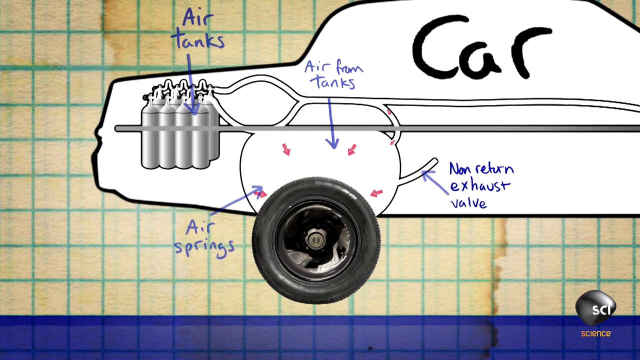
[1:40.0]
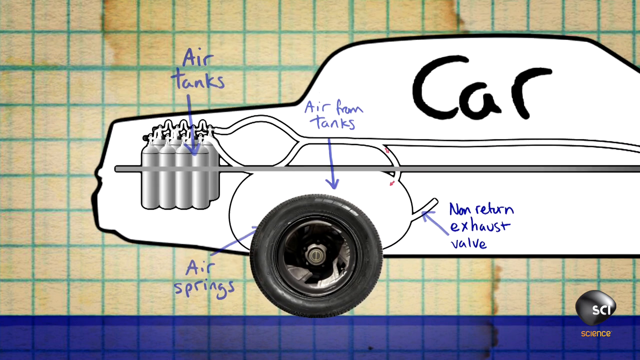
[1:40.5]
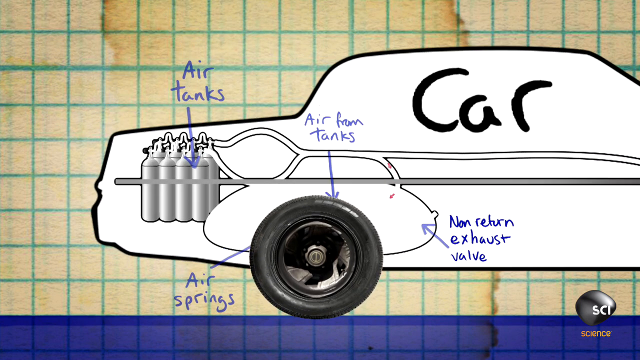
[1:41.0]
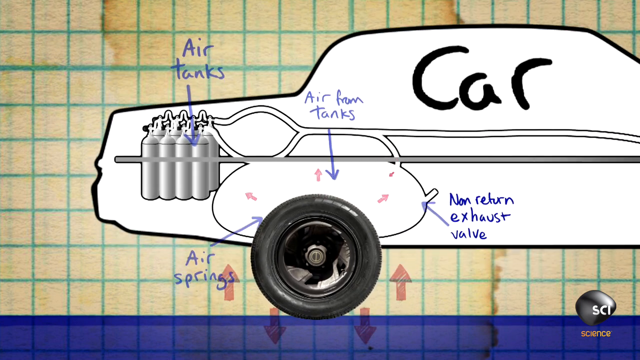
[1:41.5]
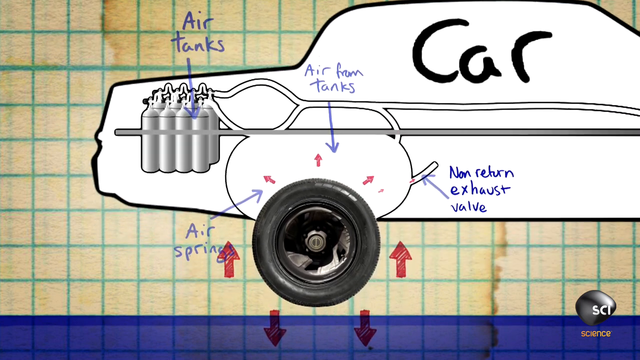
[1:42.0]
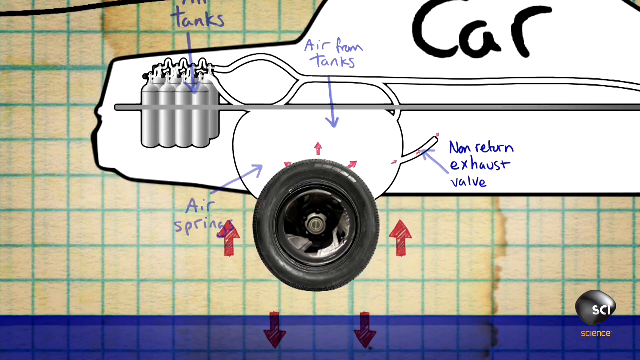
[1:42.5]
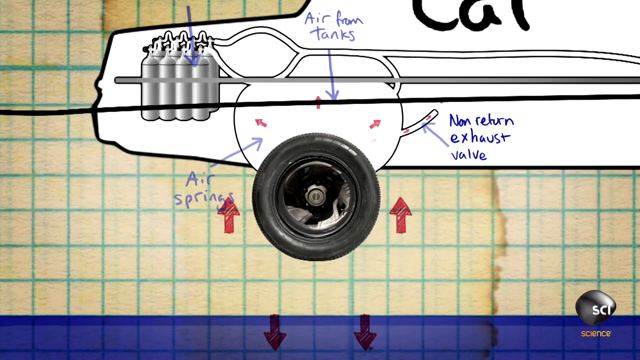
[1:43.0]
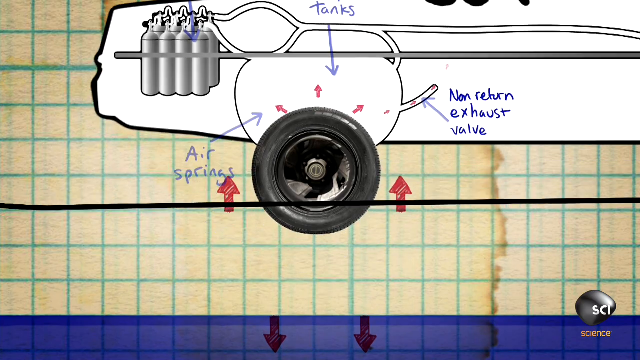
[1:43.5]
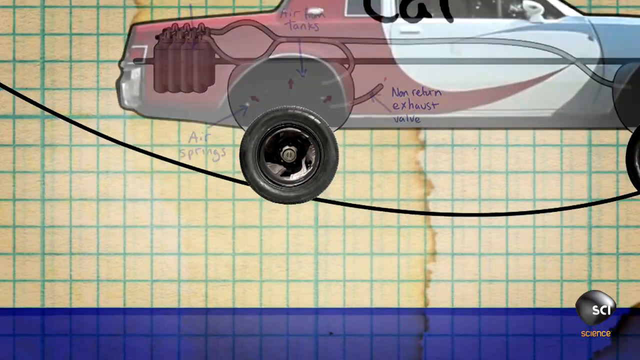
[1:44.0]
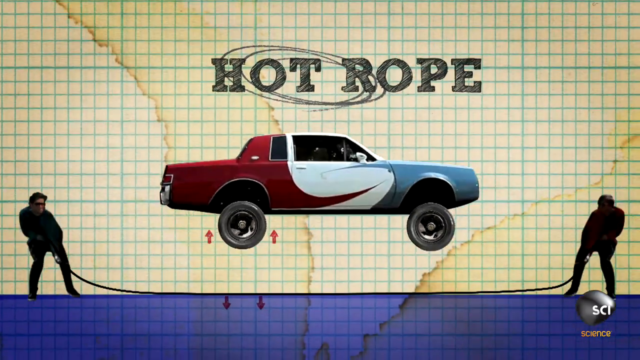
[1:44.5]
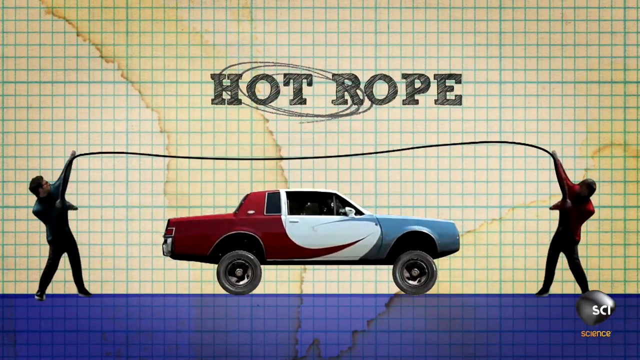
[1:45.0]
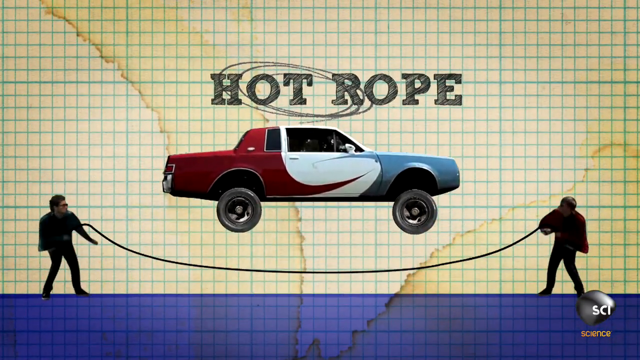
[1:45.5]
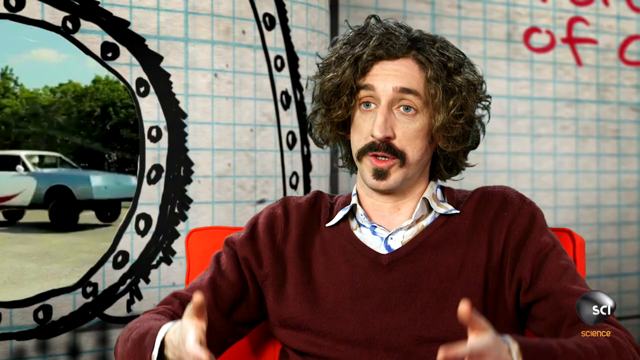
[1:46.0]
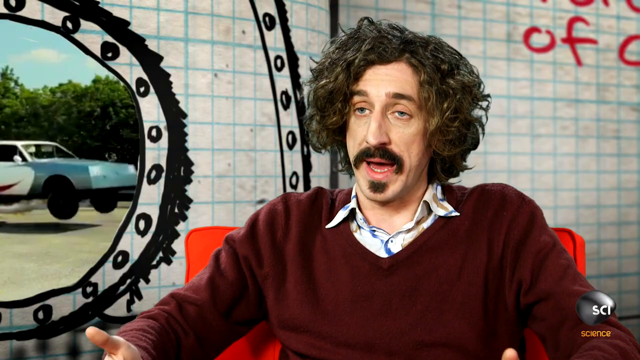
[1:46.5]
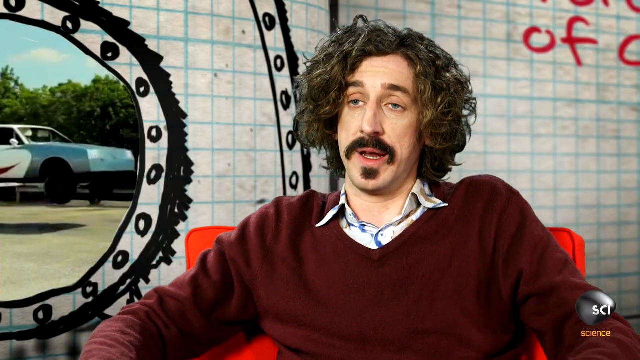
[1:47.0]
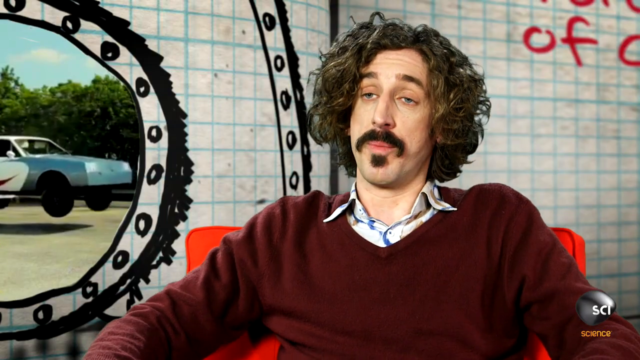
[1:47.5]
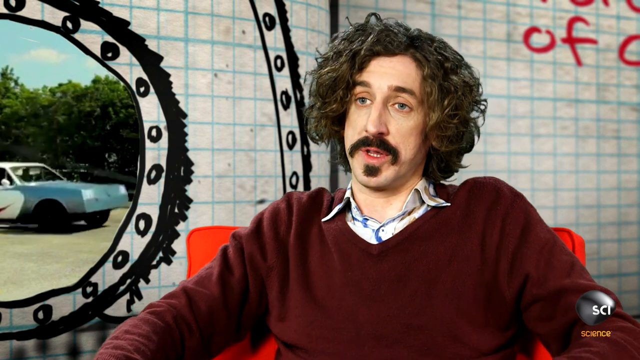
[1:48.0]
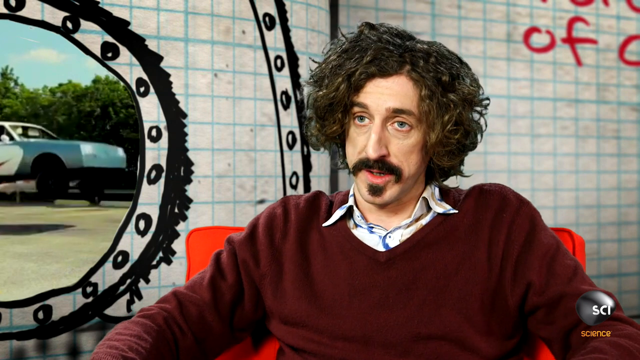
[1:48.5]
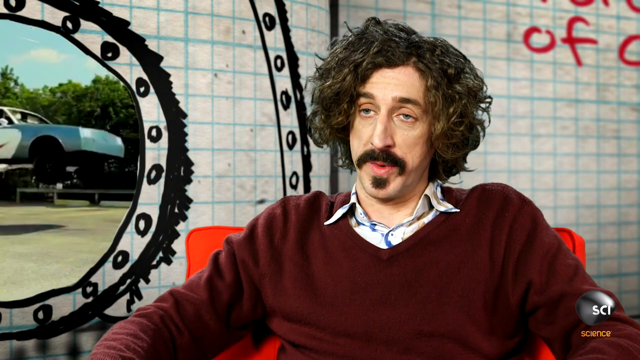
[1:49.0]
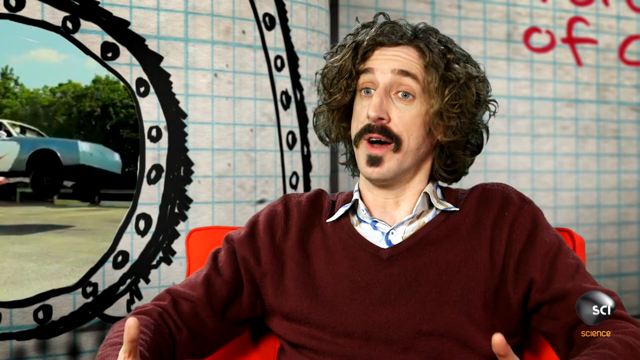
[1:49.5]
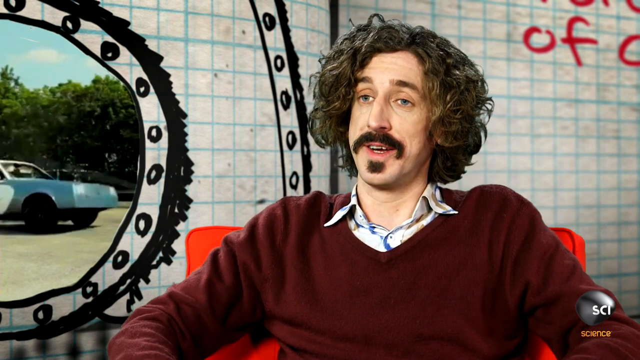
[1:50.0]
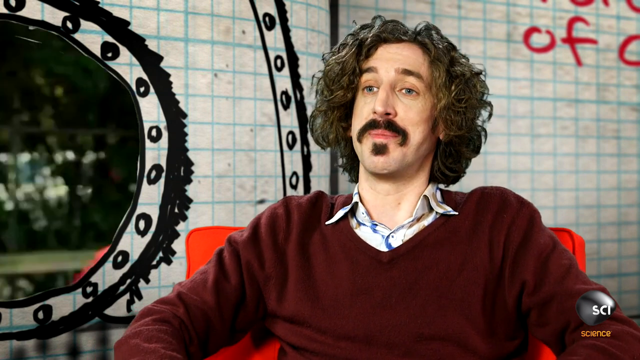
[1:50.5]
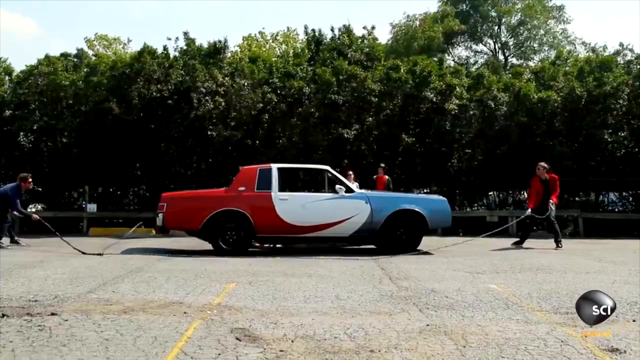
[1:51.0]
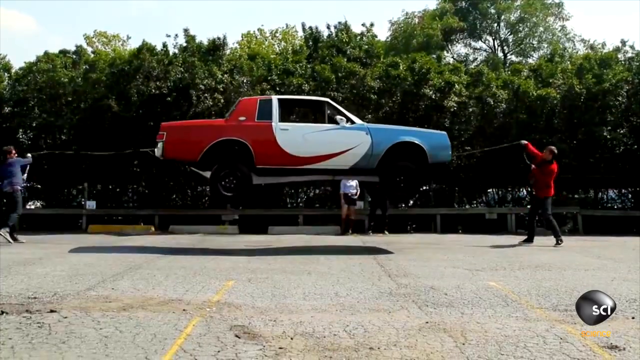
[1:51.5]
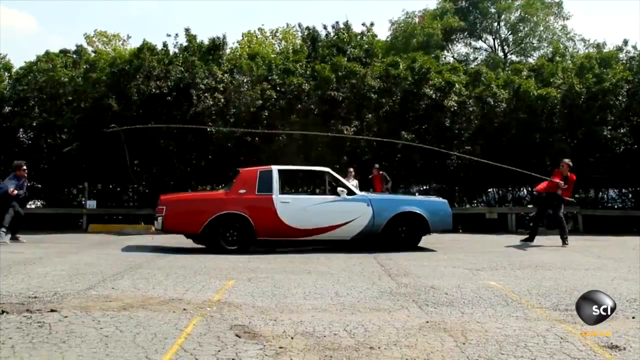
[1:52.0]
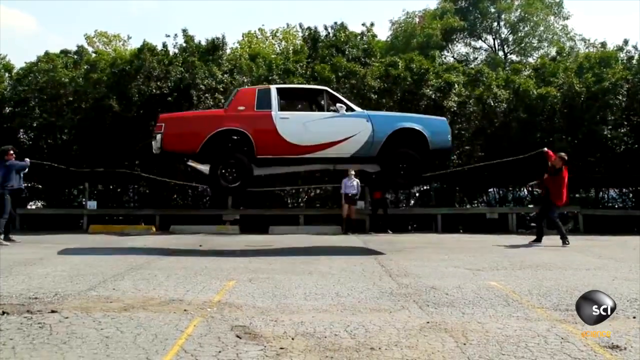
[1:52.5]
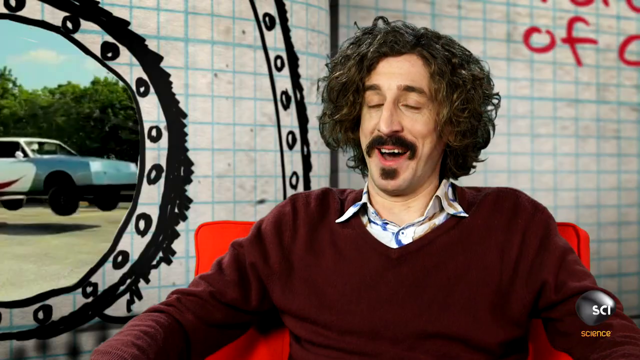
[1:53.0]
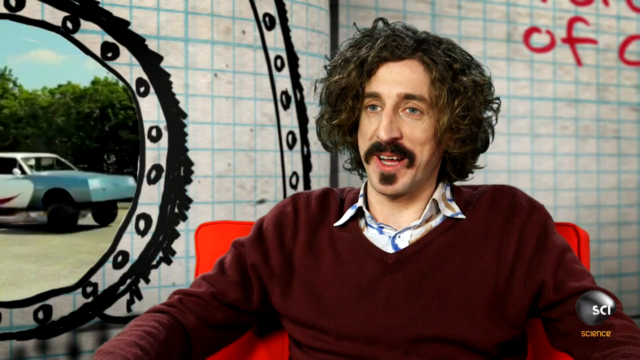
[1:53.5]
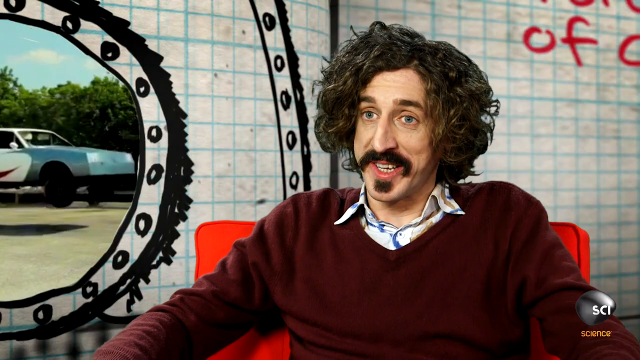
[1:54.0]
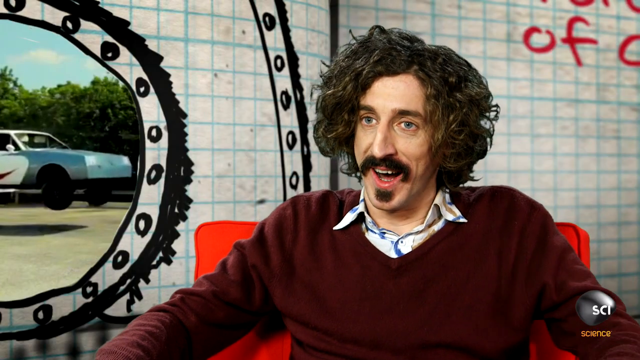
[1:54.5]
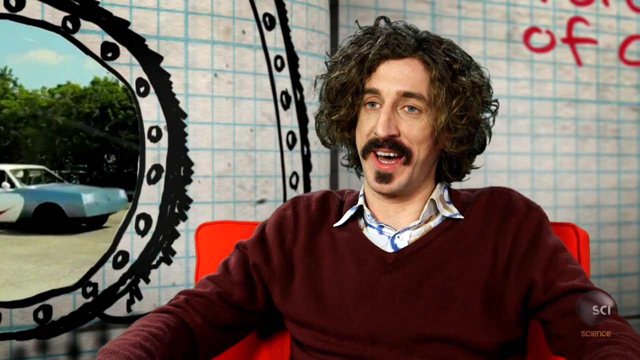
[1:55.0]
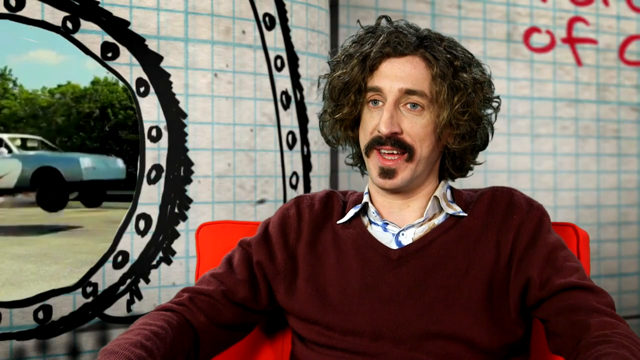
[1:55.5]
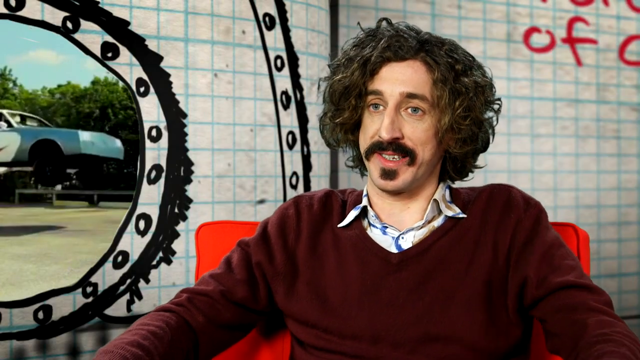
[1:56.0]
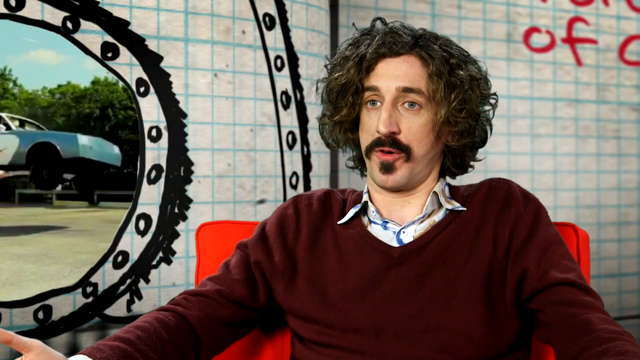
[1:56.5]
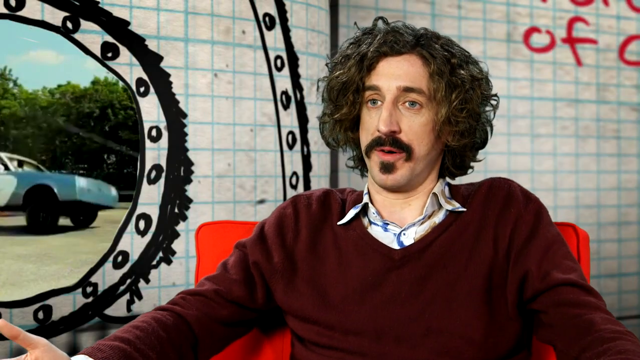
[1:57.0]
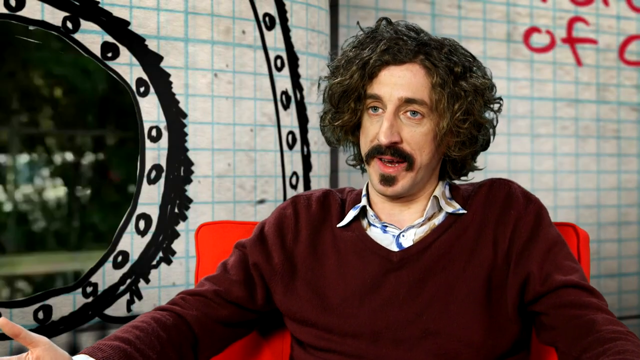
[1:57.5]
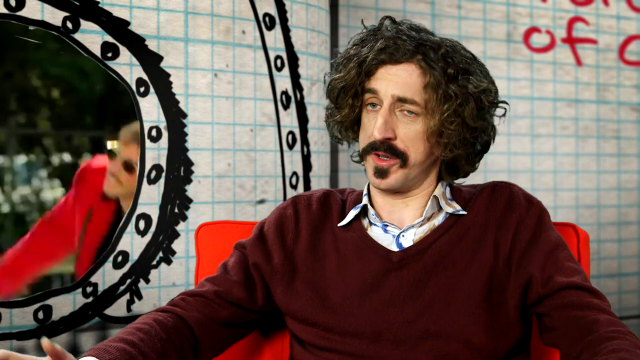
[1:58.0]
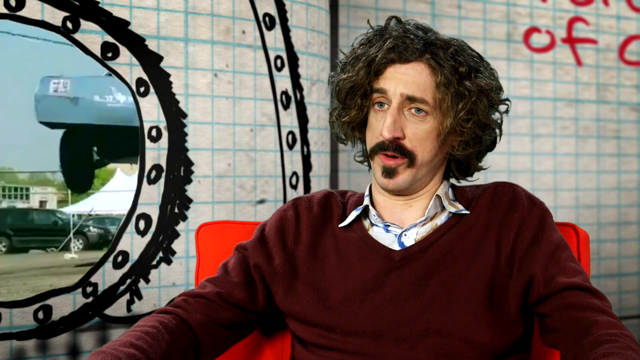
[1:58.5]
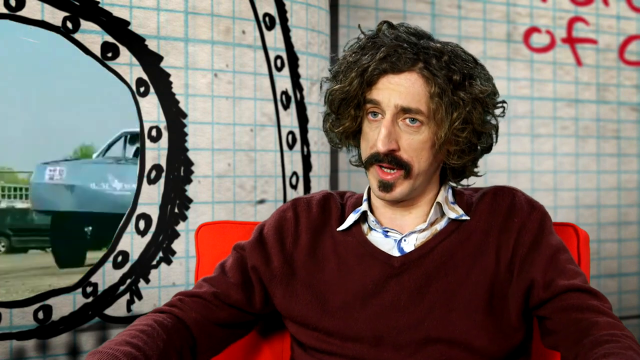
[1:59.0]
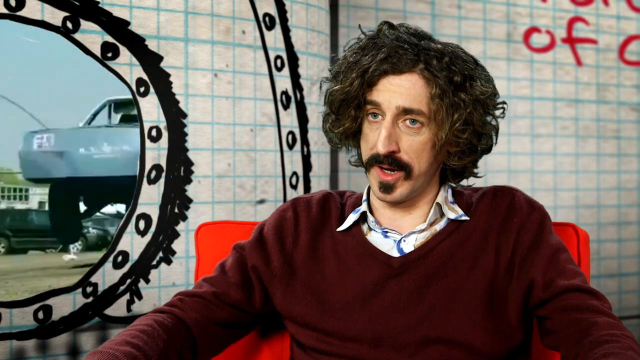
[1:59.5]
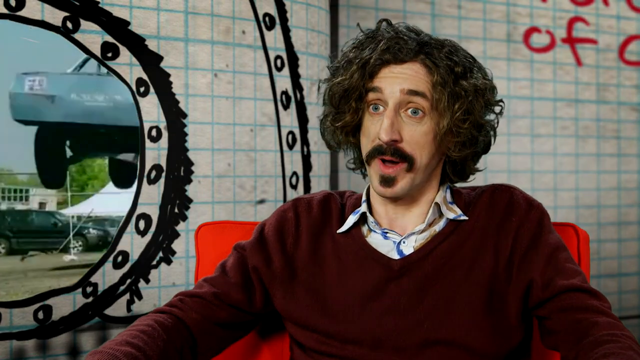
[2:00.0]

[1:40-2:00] The cartoon explanation shows that while the car is in the air and the air springs are full, they start to deflate, with the air passing through the non-return exhaust valve. By the time the car lands, the air springs are empty, allowing more air to be pumped back in, which causes the car to bounce into the air again. The video moves back to the engineer with the goatee beard, moustache and wavy hair, who continues explaining. He sits in his chair with his hands on its arms and, unlike Jessica, uses almost no hand gestures. There are brief shots of the car bouncing up and down over the rope, with the two people at either end spinning the skipping rope. The video cuts back to the engineer continuing his explanation, and then the screen goes blank.